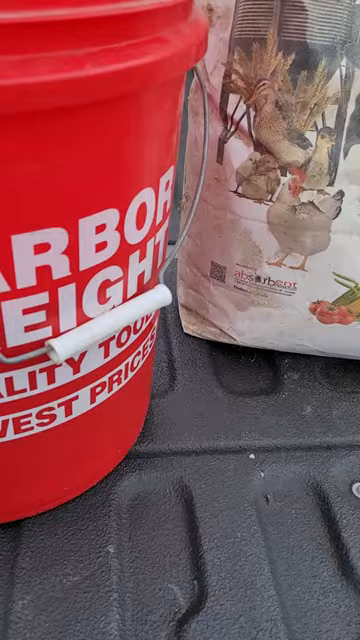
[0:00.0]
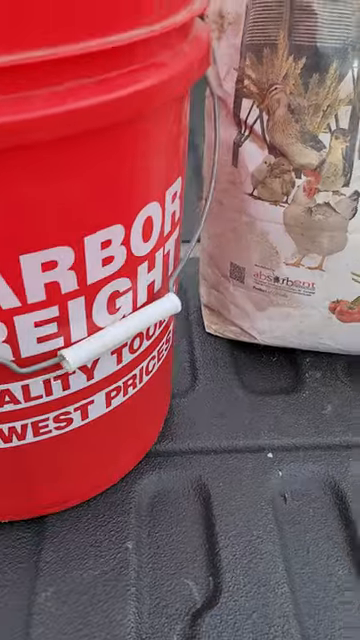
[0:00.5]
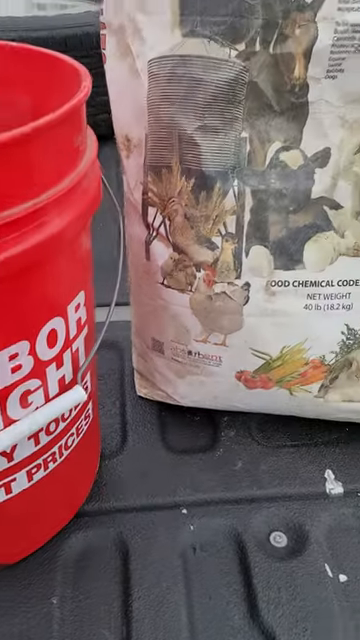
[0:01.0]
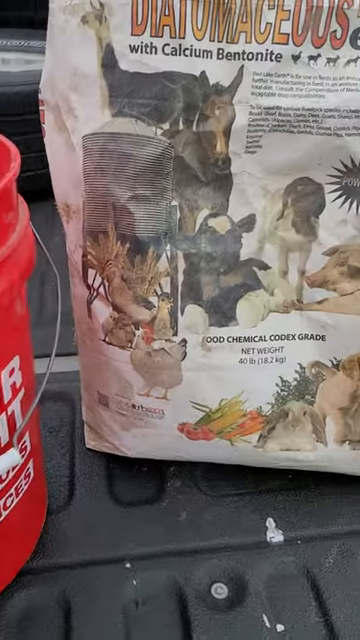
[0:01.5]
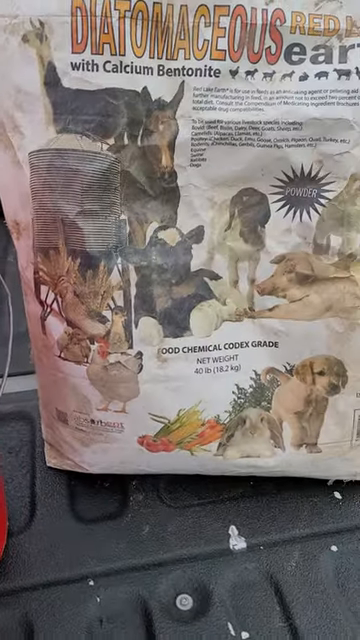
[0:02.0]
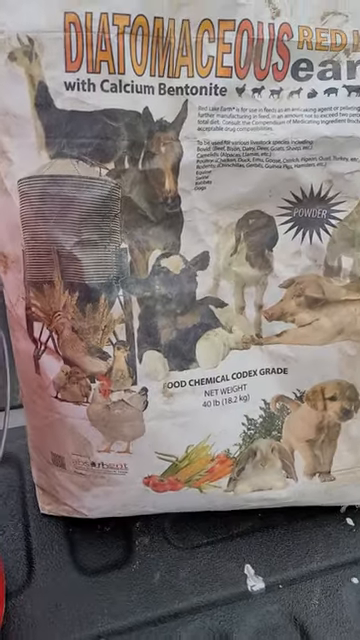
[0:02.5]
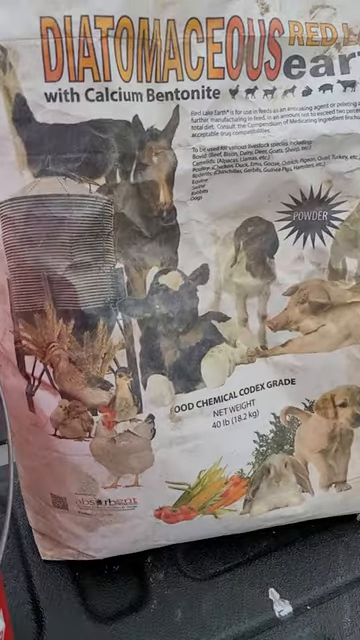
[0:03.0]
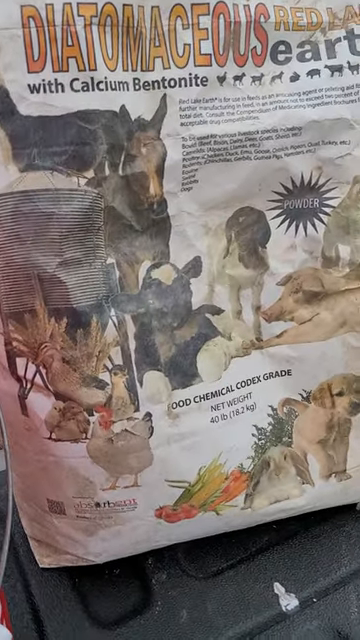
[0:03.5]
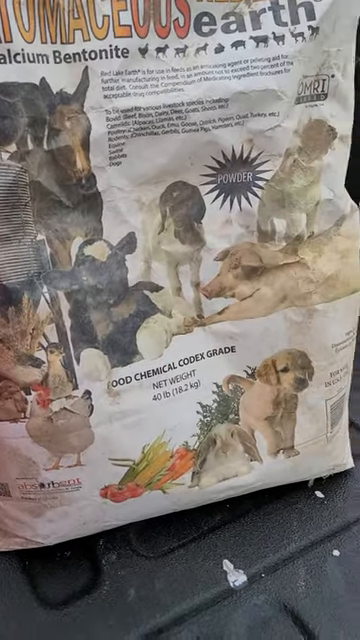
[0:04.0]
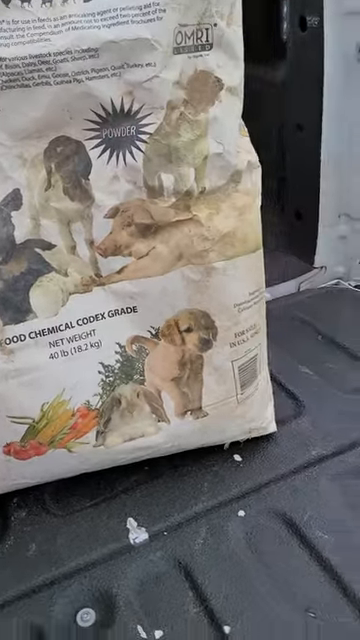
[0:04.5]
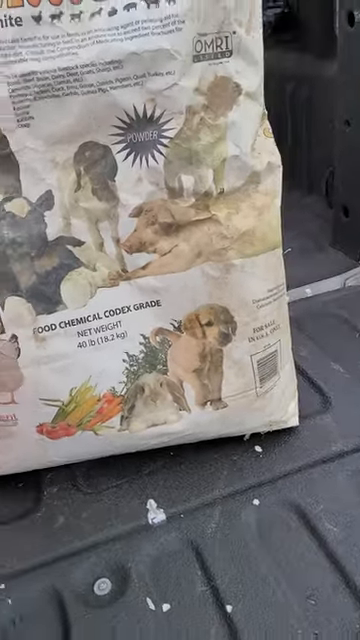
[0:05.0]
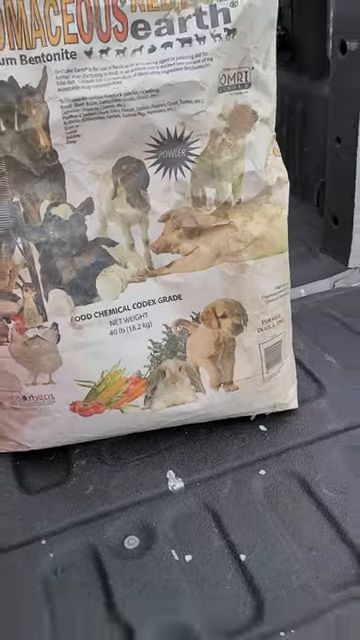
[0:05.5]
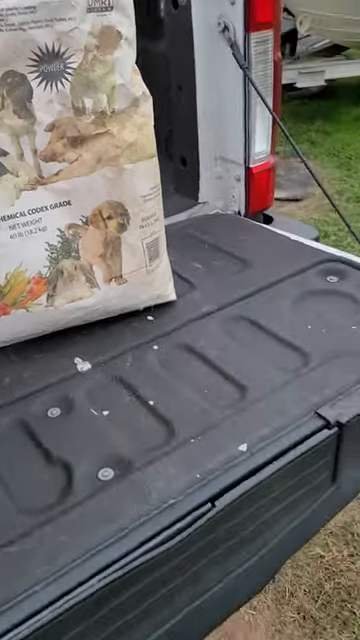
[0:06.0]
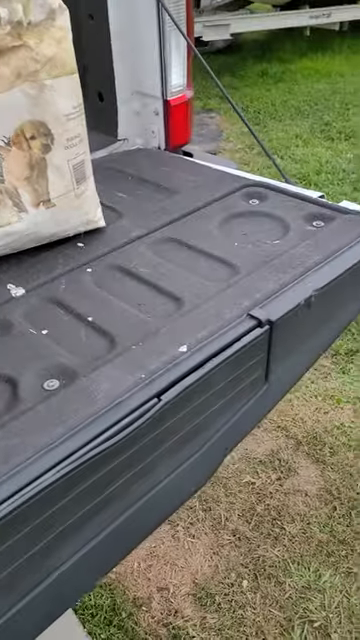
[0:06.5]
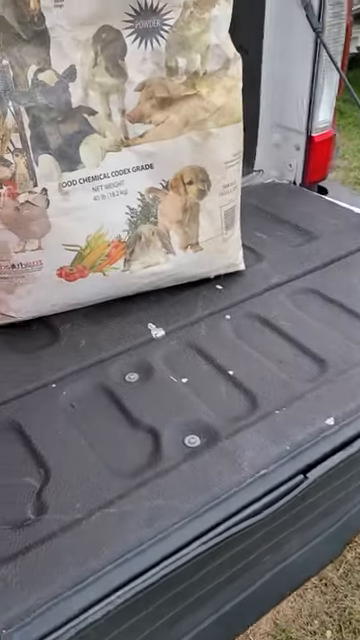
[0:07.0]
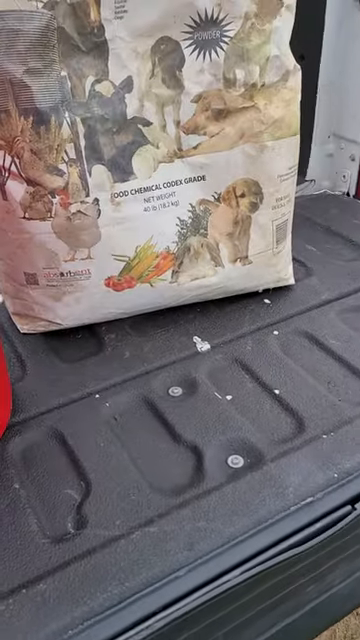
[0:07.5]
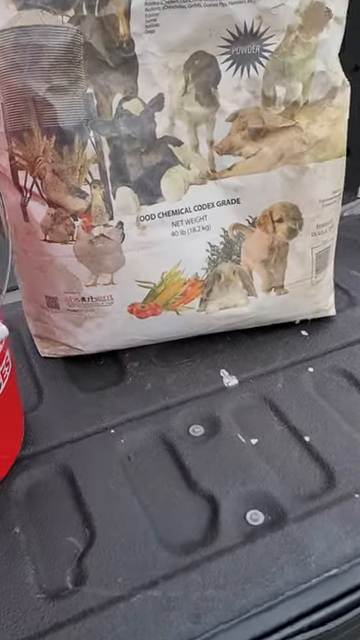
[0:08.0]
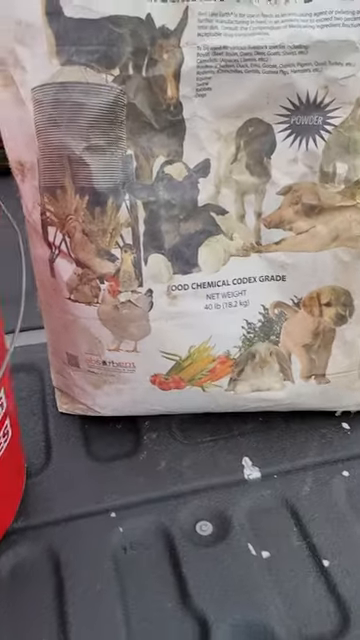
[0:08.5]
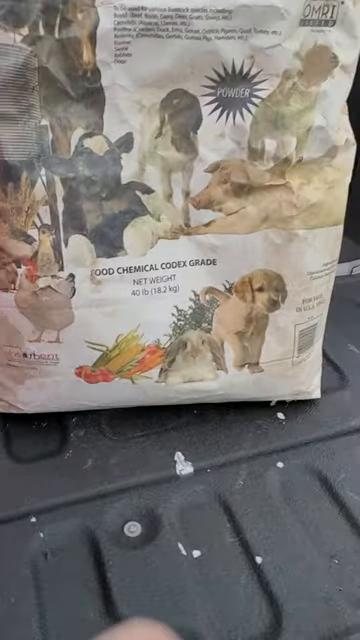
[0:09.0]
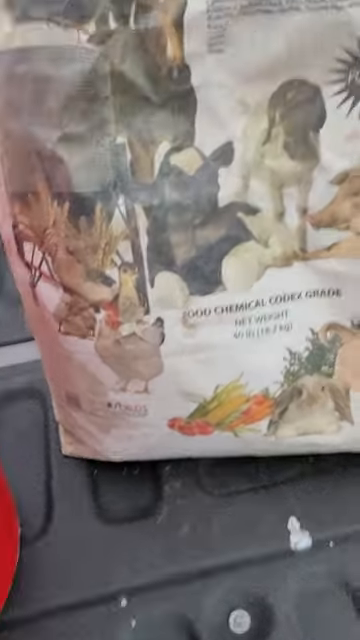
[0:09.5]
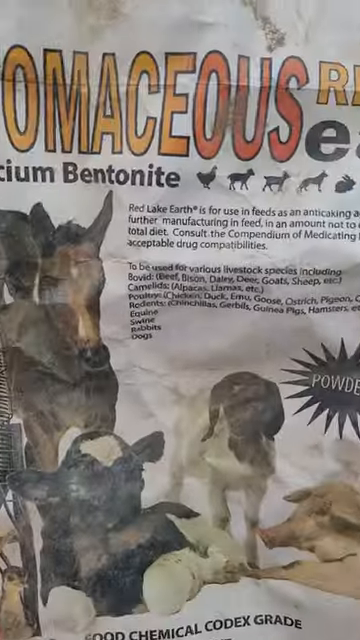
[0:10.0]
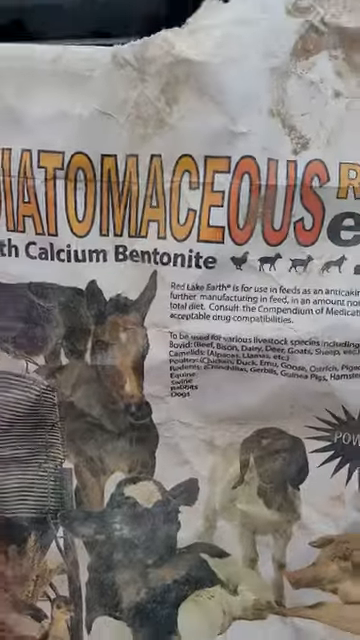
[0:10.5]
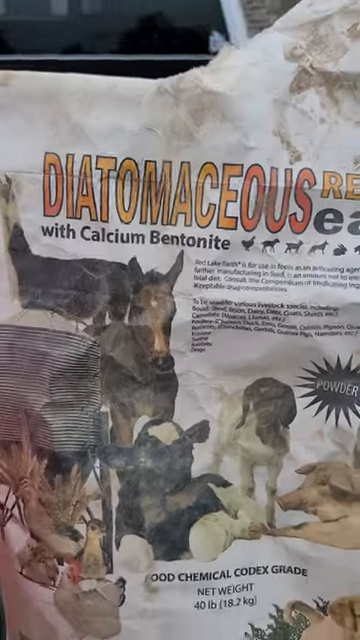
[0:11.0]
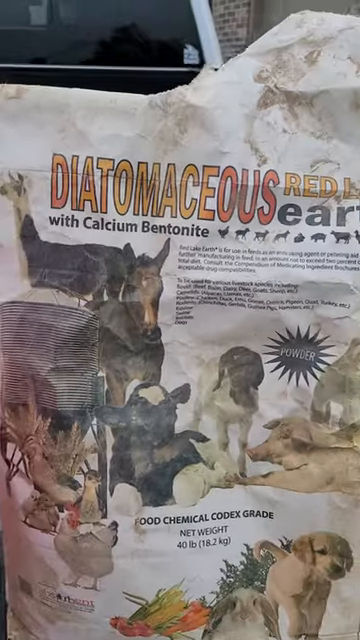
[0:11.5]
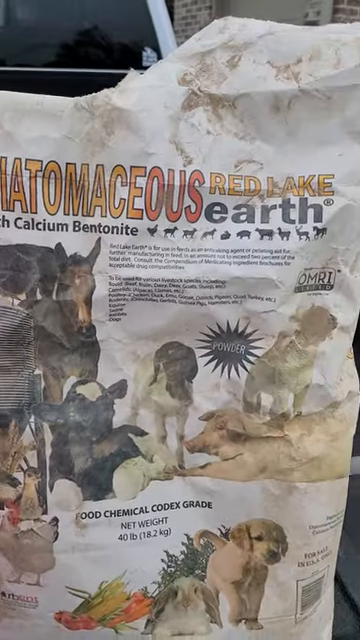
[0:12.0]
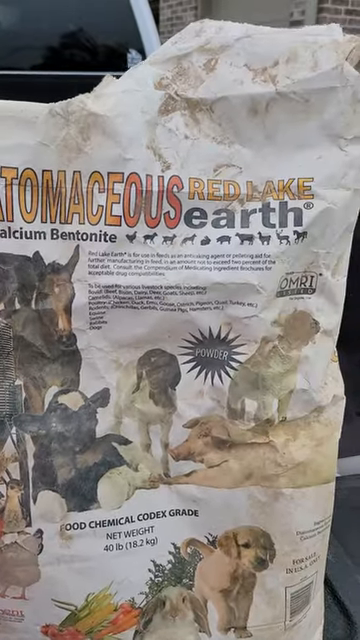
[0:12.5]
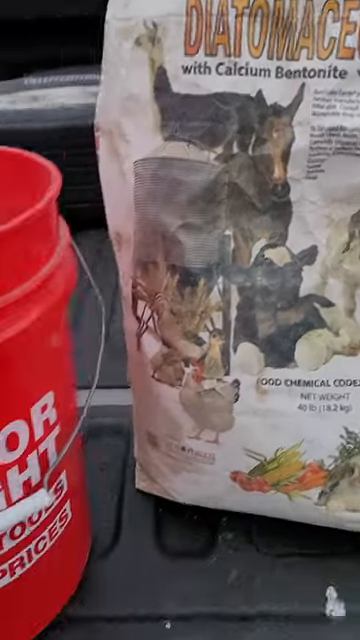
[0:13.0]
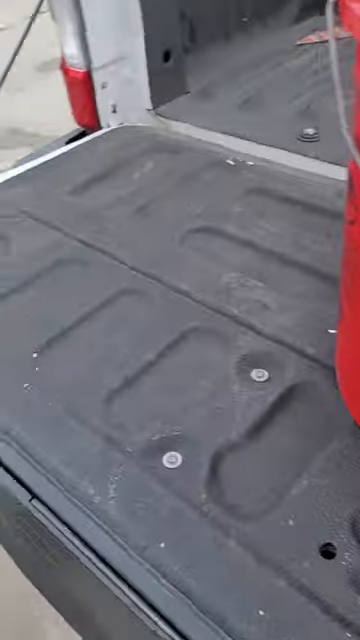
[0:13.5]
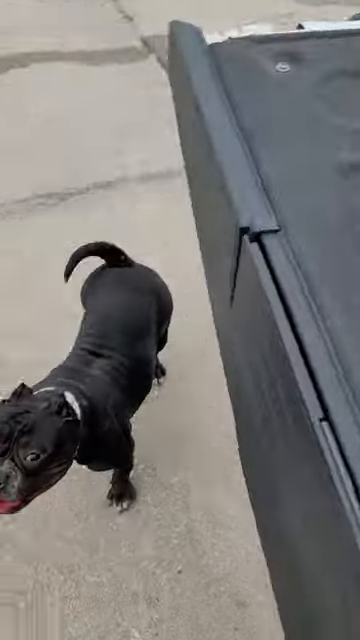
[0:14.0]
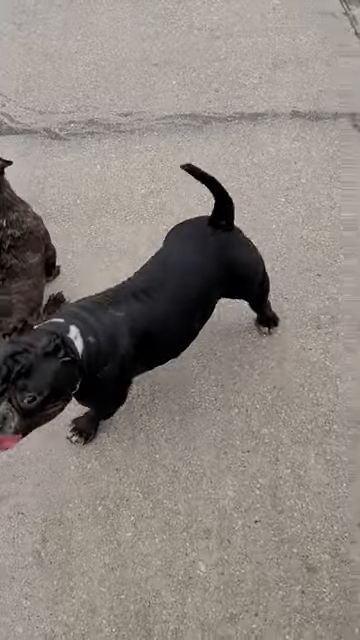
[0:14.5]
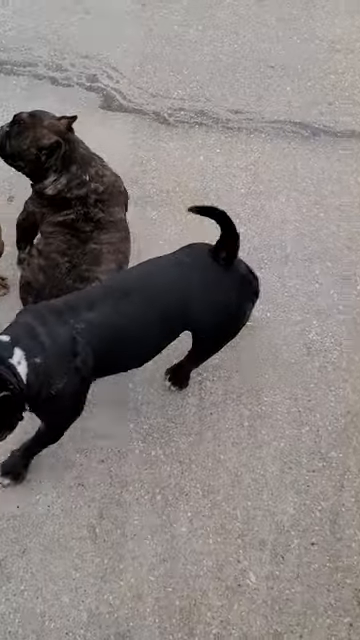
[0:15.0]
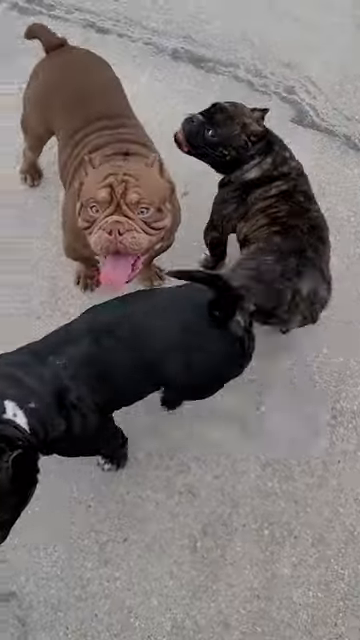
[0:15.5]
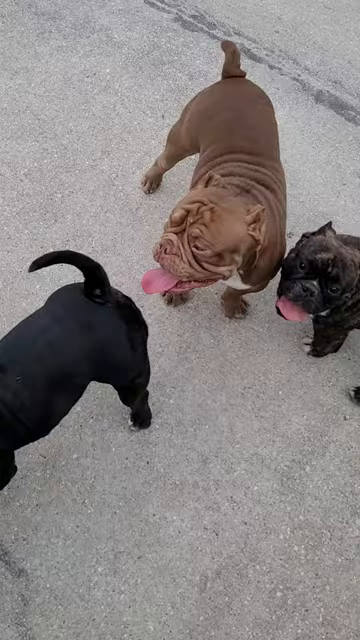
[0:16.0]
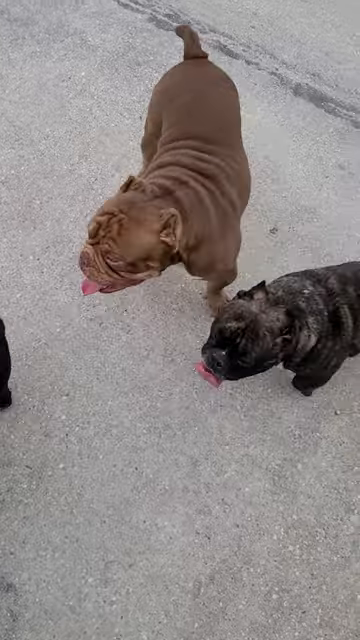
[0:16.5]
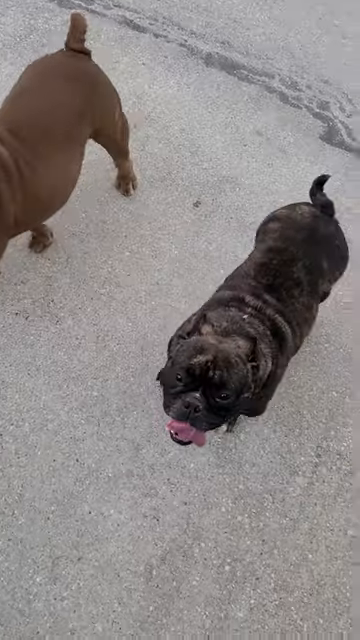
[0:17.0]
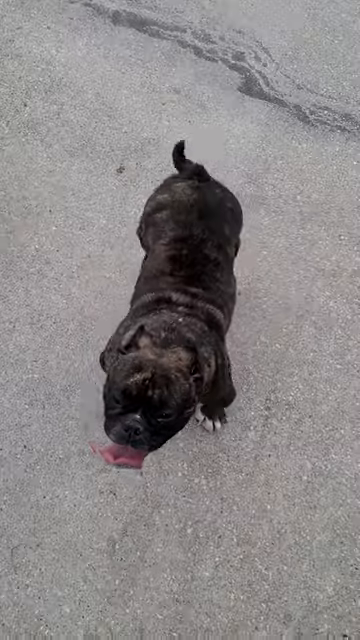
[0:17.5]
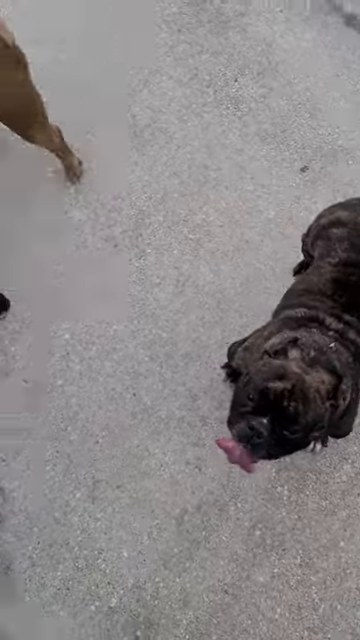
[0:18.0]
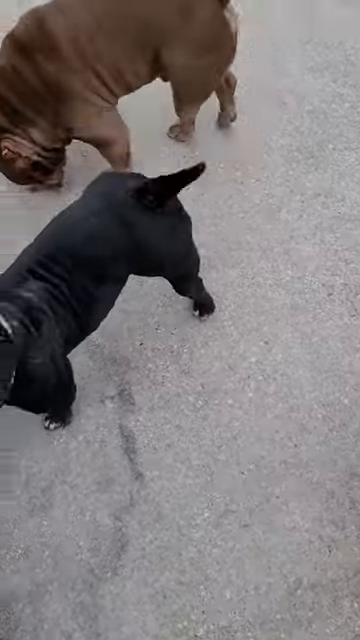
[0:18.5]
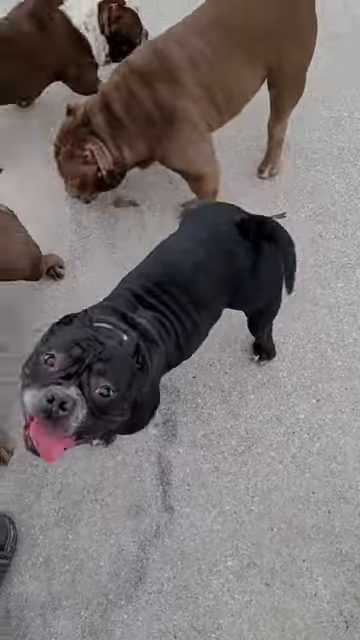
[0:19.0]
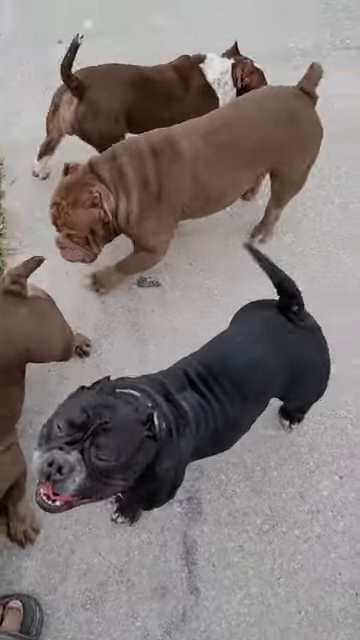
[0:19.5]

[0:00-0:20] A close-up shows a red bucket on the left-hand side, only partly visible, and what looks like some kind of animal food in a white bag standing vertically in the bed of a truck. The camera zooms in on the white bag, which shows the title of the food followed by "with calcium bentonite" and a couple of images of animals such as a dog, a horse and a bird. The camera moves down to the back corner of the truck bed, then moves back and focuses on the white bag, zooming in on its top part, where there are a couple of paragraphs of small black text; toward the top the bag says "red lake earth". The camera quickly rotates to the left and downward to a small black dog, and then three dogs are in view, two black and one brown, all looking very happy to see their owner. Two more dogs then enter the frame.